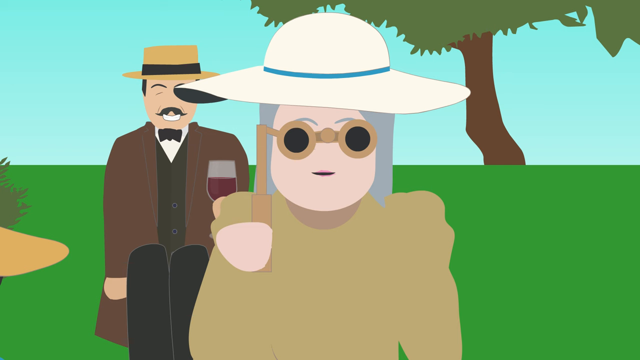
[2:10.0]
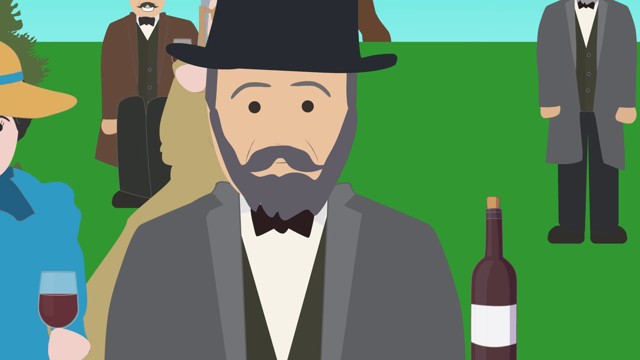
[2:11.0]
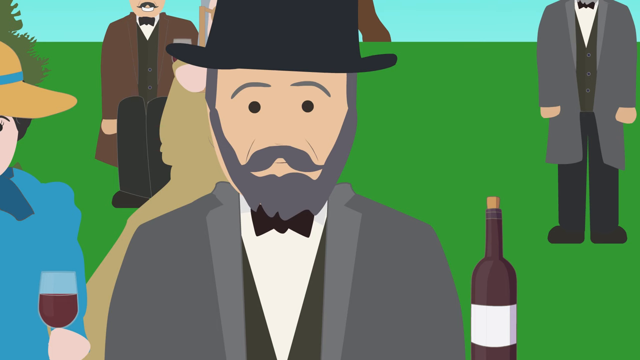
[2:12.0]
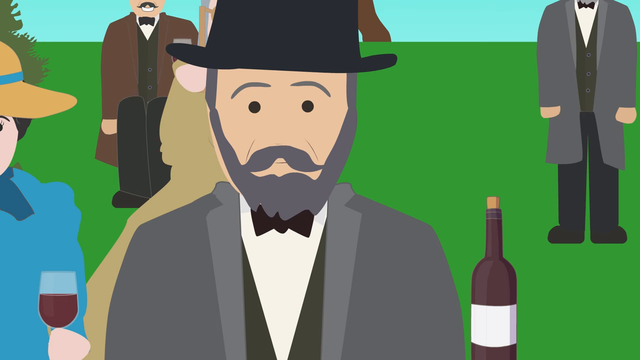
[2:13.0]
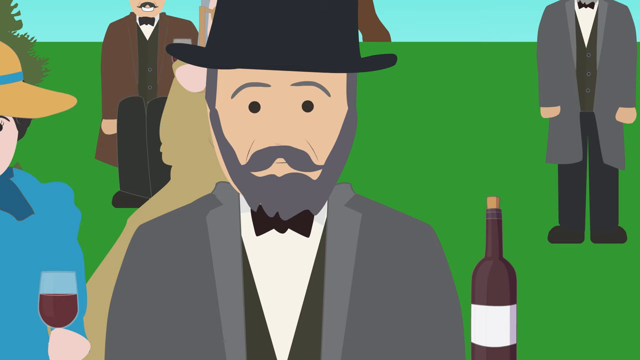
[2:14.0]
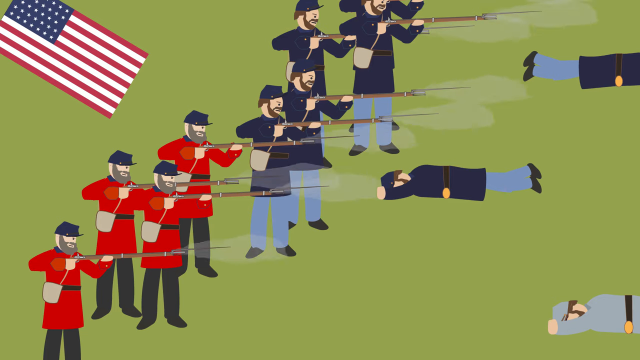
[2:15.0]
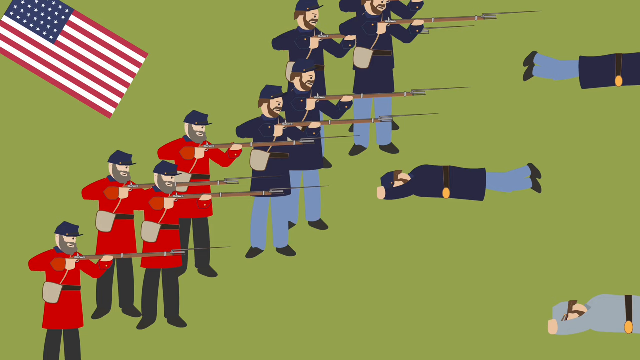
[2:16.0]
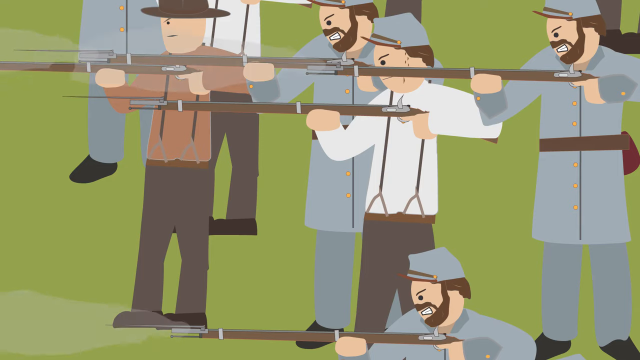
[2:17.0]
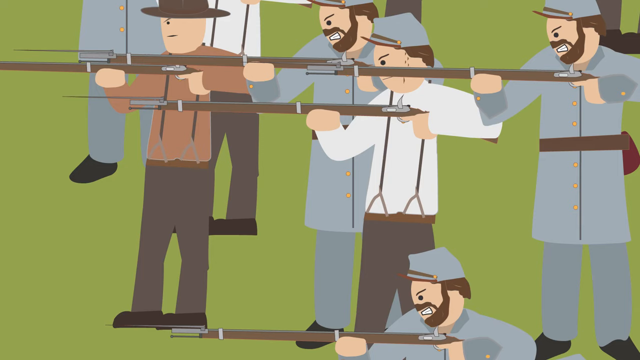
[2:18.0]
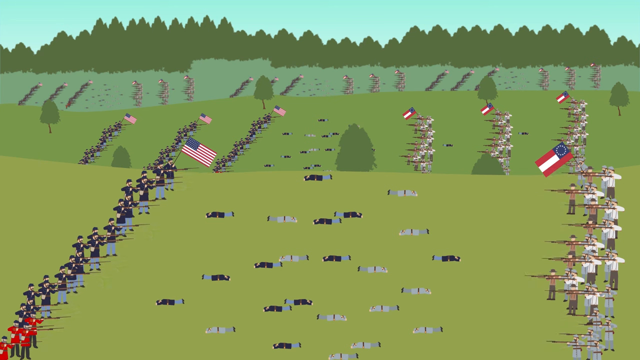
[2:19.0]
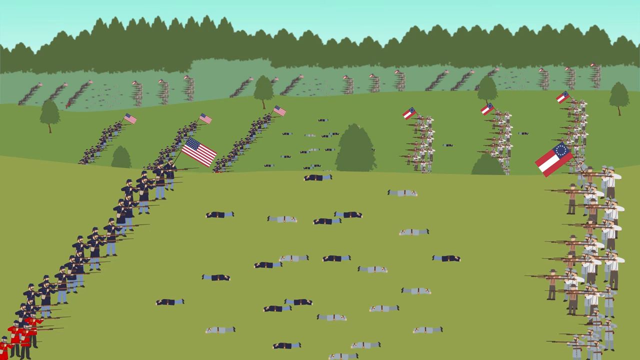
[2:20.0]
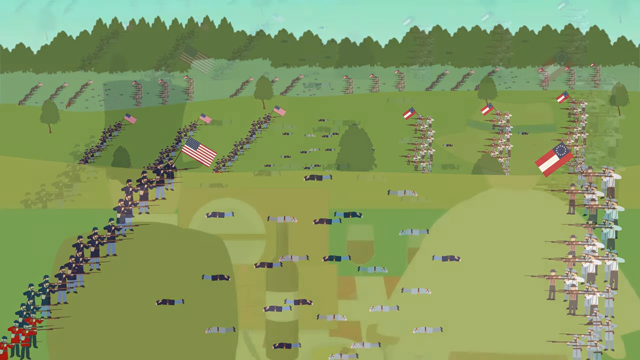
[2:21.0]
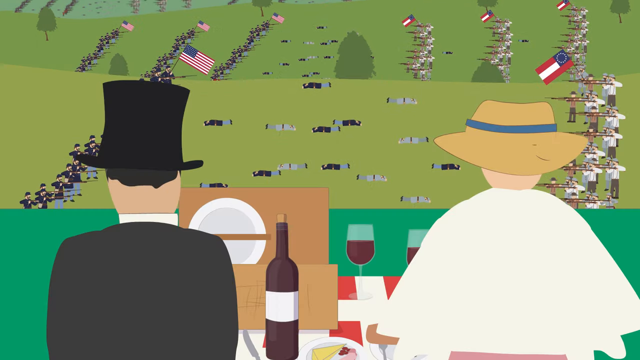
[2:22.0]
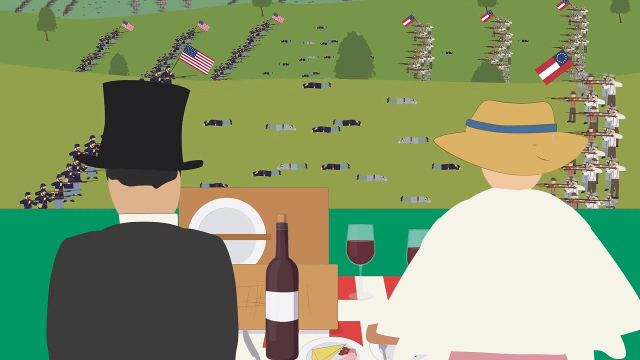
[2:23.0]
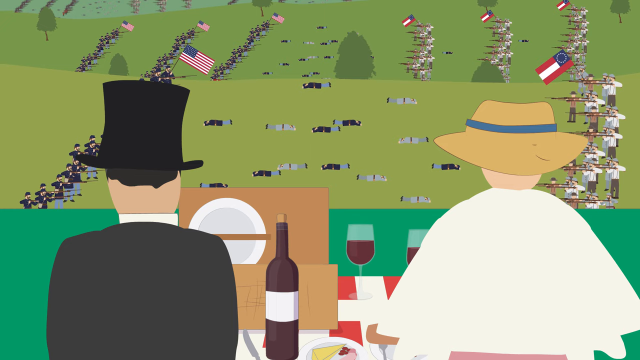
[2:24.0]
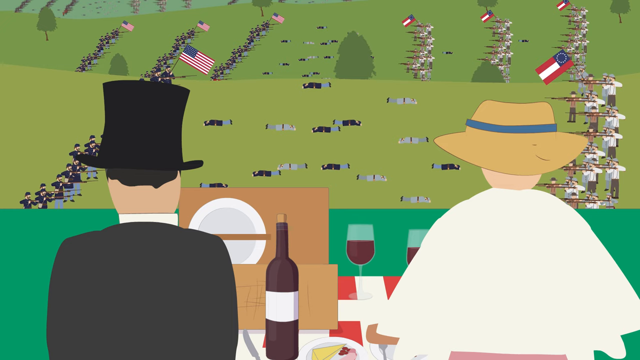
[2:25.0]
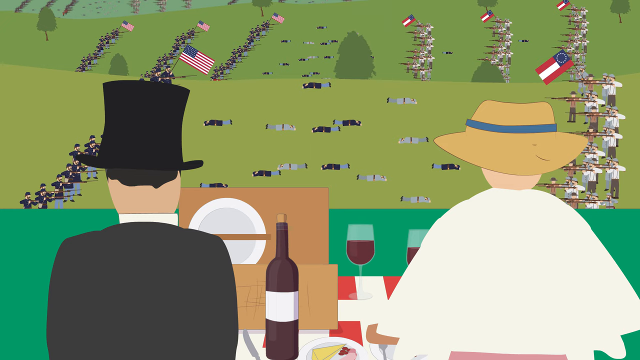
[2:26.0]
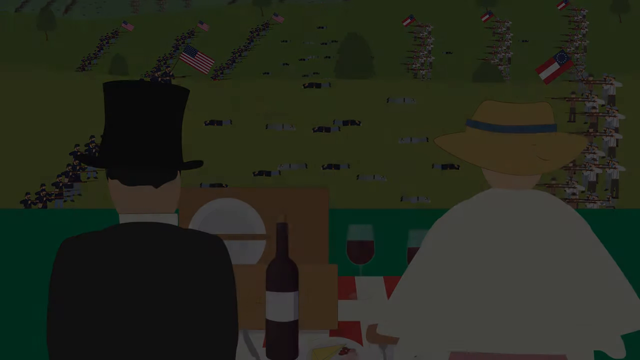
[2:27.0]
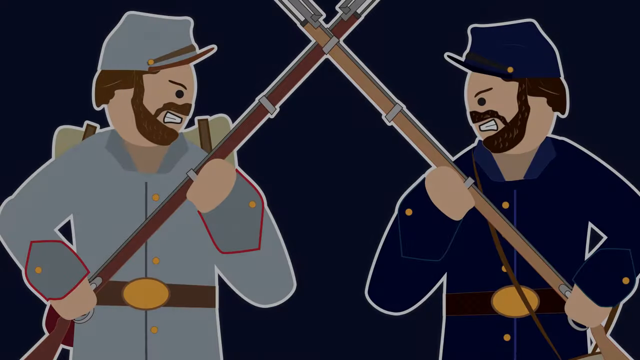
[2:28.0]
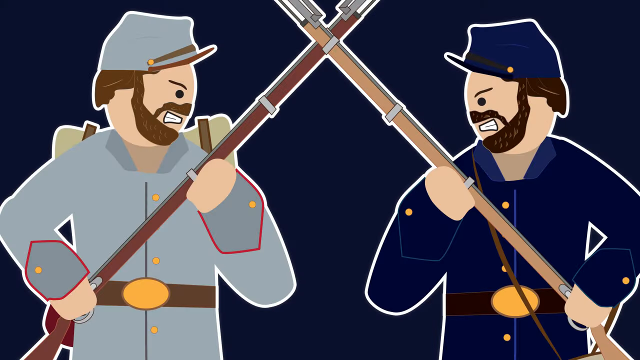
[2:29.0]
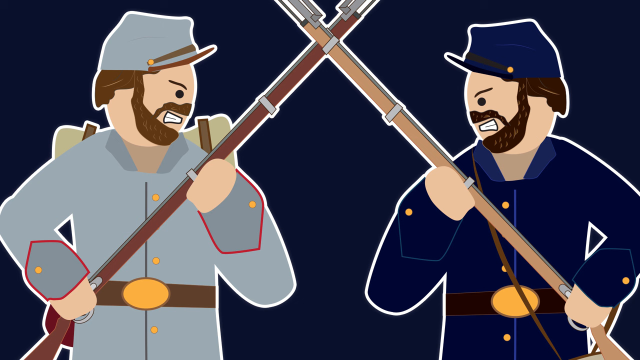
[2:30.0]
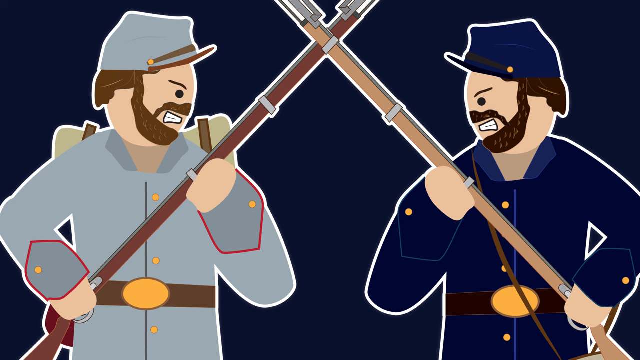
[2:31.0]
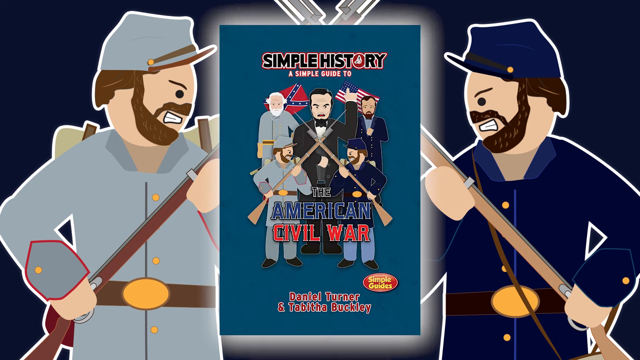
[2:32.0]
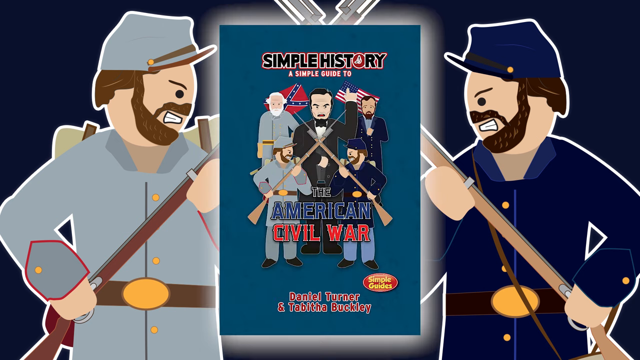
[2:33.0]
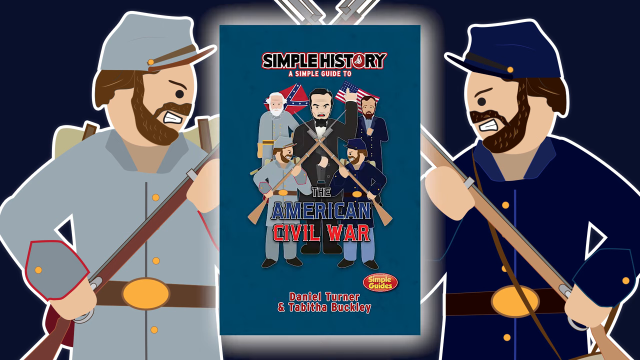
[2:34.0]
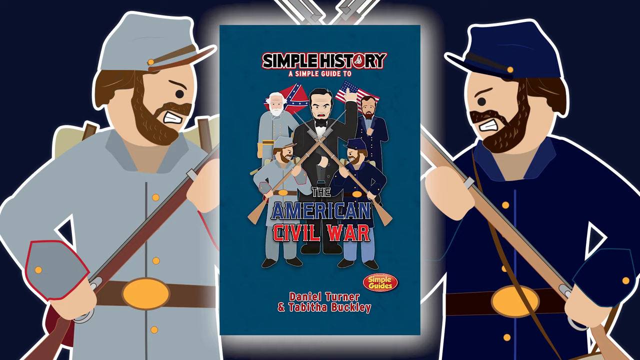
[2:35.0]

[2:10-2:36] People picnic high up on hillsides while watching a Civil War battle take place in the valleys, fields and pastures below them. At the end, the video shows a book, "a simple history, a simple guide to the American Civil War," written by Daniel Turner and Tabitha Buckley, with a small sticker on it that says "Simple Guides." On the left is a Confederate infantryman dressed in his Civil War uniform, and on the right is a Union infantryman.